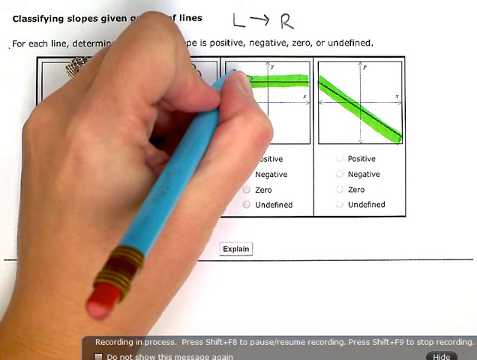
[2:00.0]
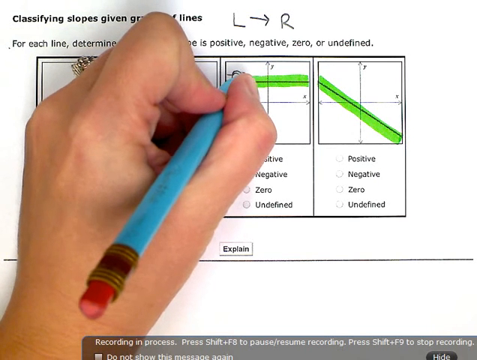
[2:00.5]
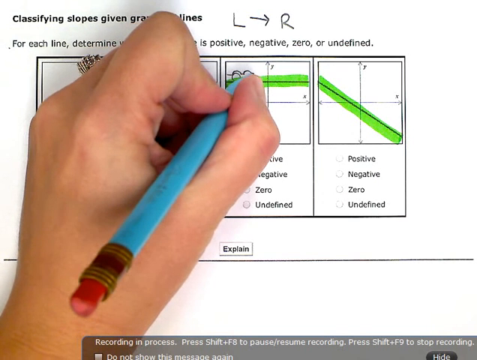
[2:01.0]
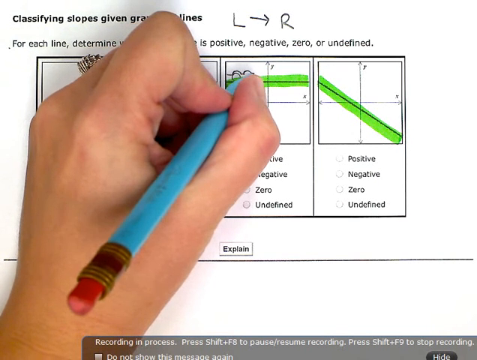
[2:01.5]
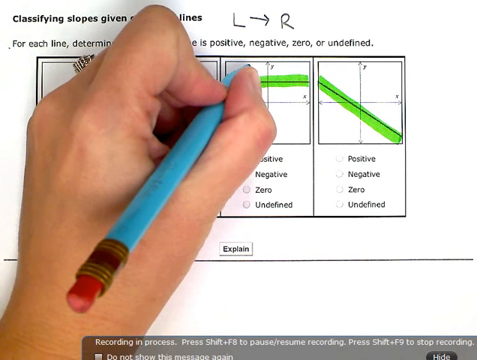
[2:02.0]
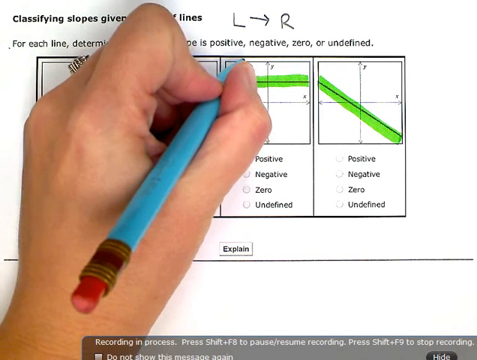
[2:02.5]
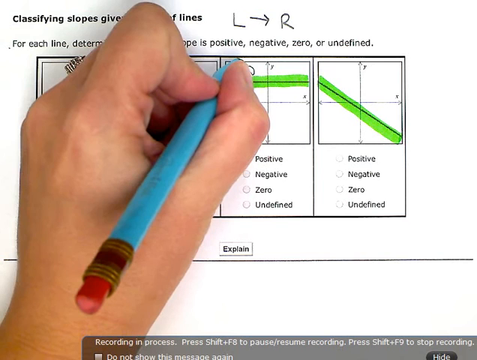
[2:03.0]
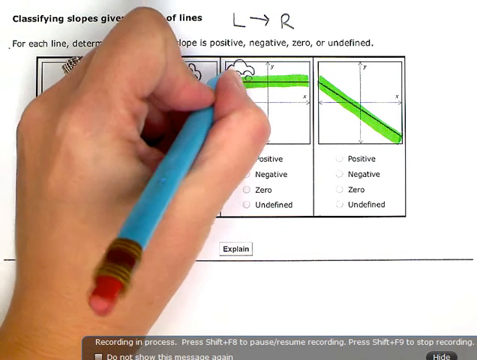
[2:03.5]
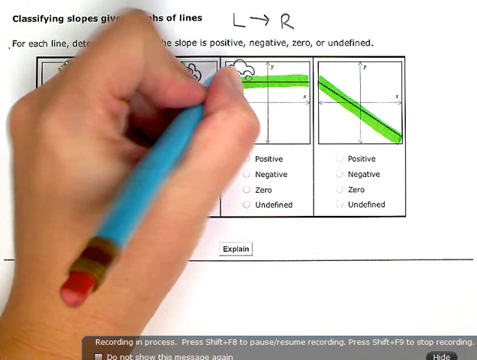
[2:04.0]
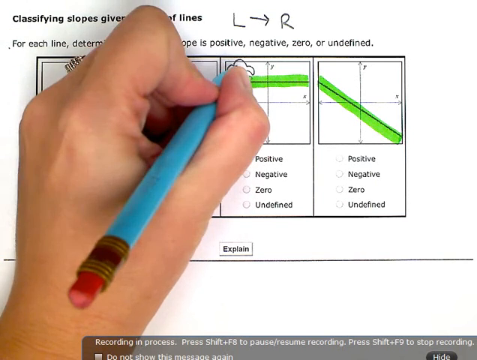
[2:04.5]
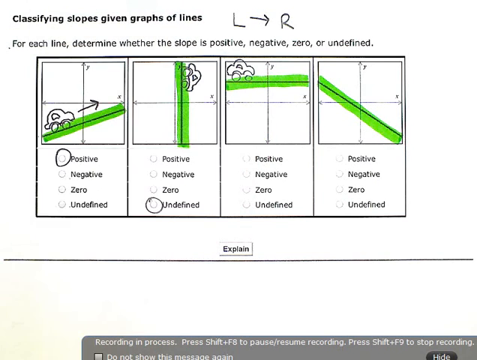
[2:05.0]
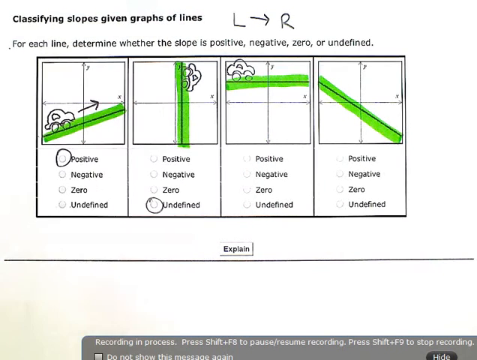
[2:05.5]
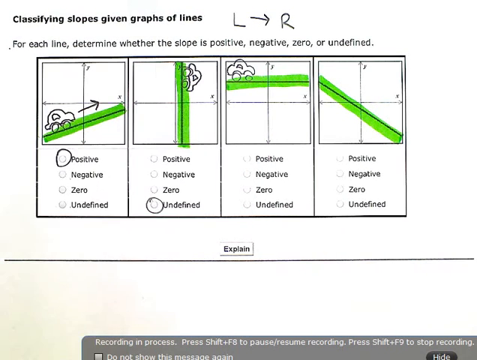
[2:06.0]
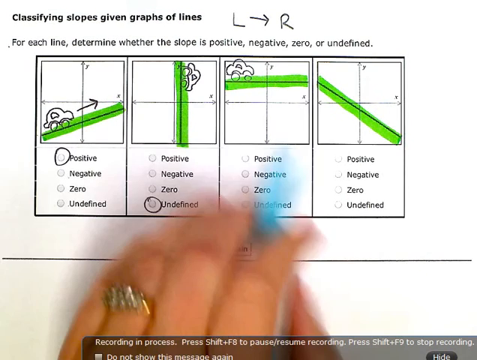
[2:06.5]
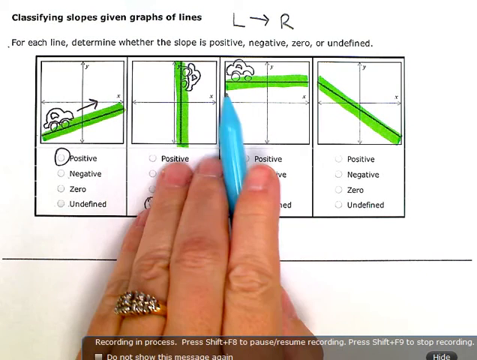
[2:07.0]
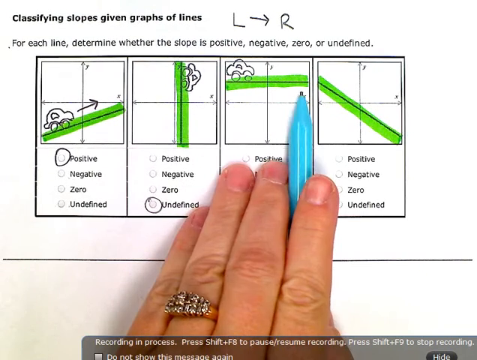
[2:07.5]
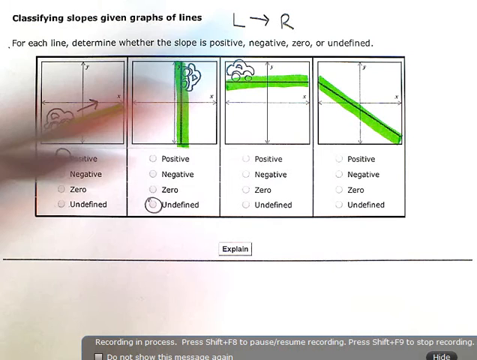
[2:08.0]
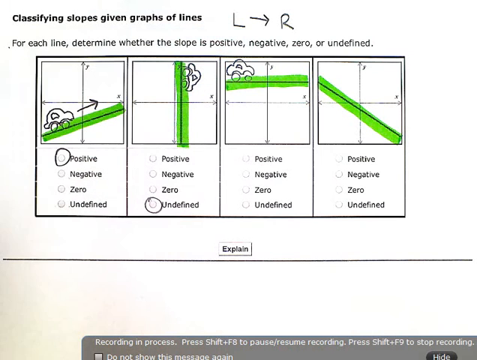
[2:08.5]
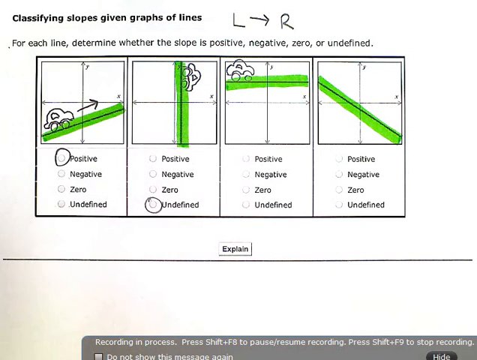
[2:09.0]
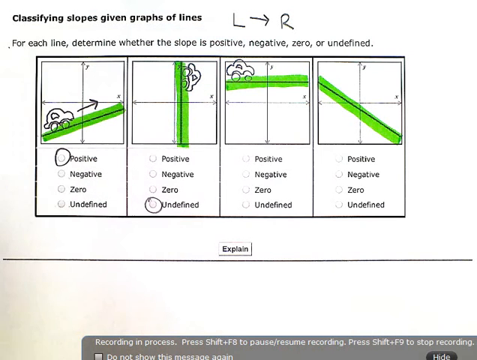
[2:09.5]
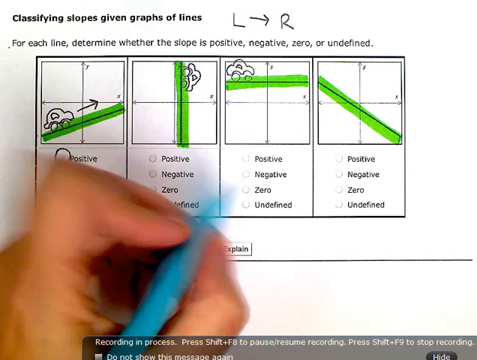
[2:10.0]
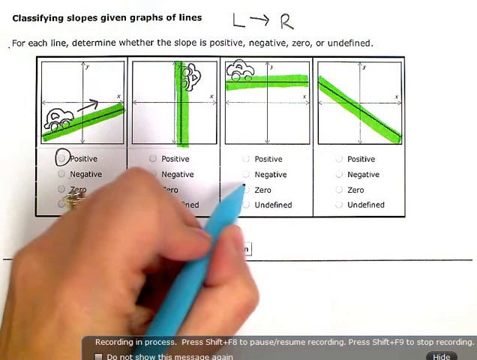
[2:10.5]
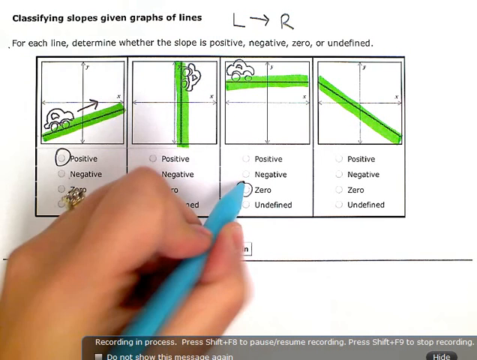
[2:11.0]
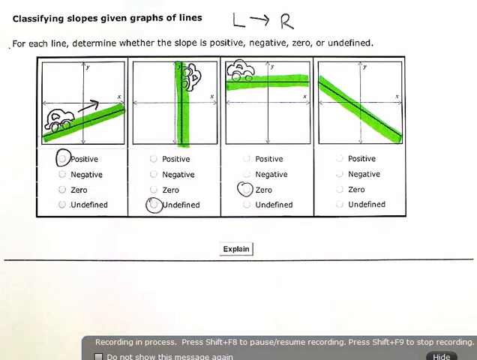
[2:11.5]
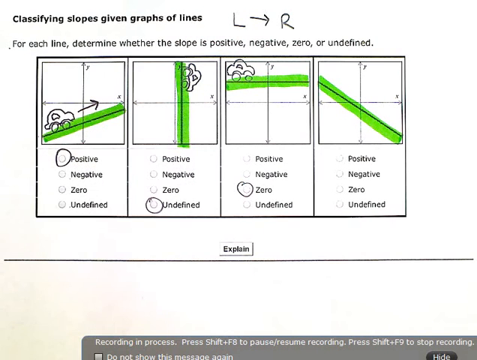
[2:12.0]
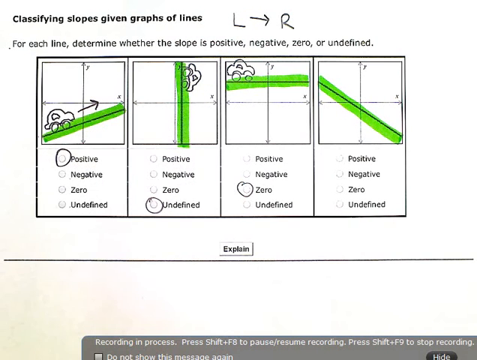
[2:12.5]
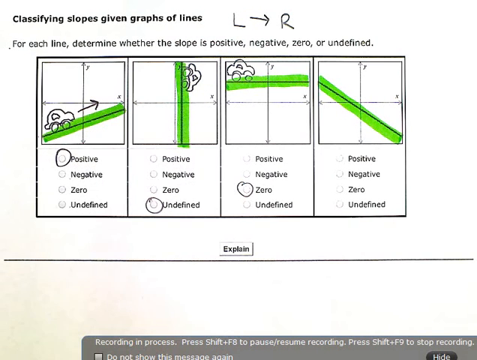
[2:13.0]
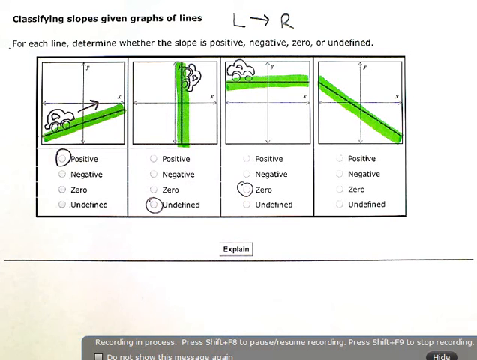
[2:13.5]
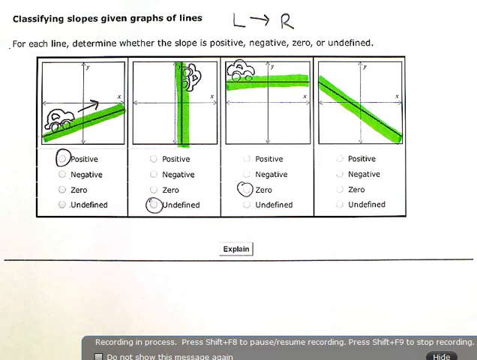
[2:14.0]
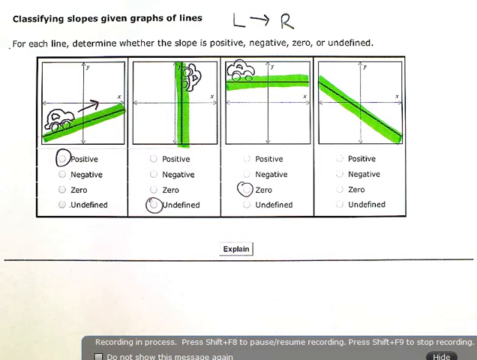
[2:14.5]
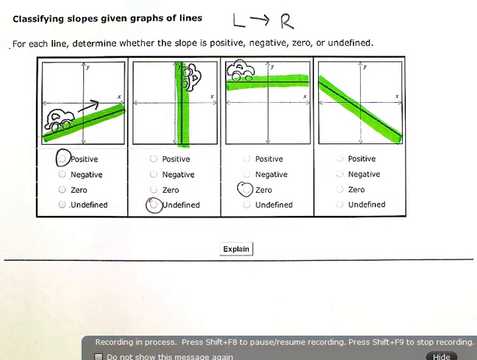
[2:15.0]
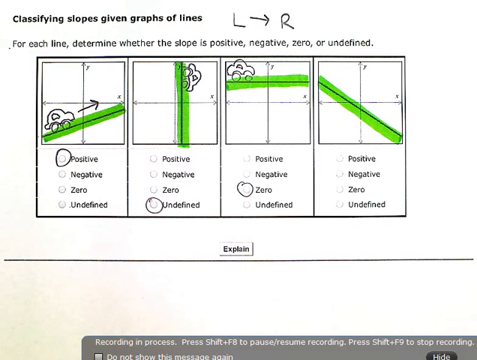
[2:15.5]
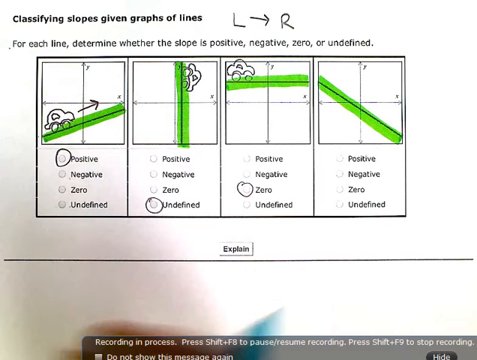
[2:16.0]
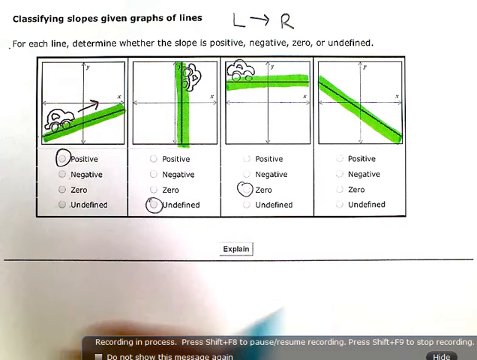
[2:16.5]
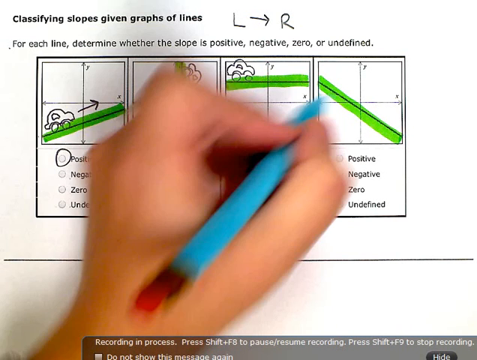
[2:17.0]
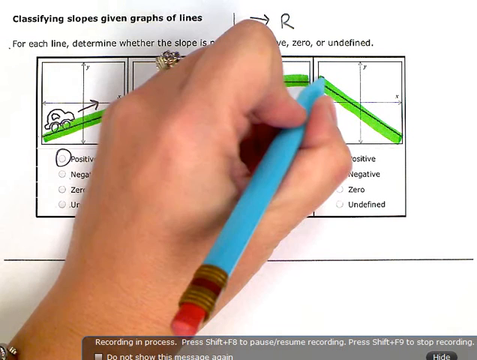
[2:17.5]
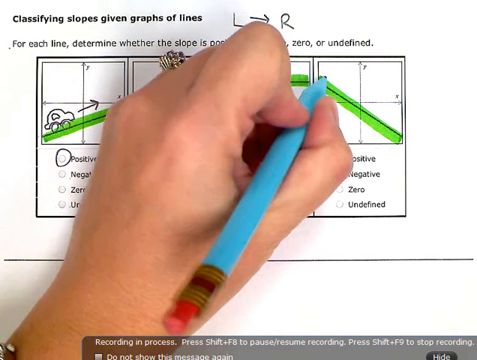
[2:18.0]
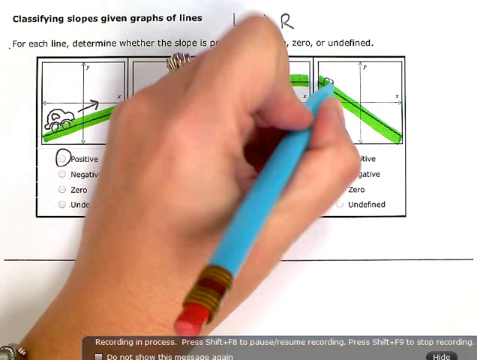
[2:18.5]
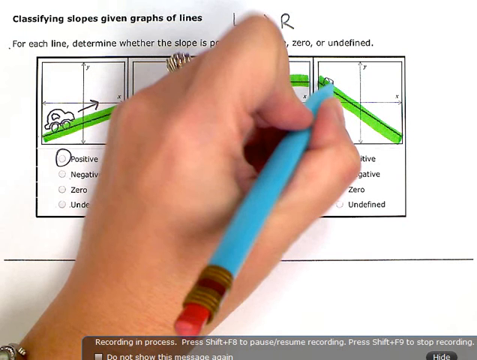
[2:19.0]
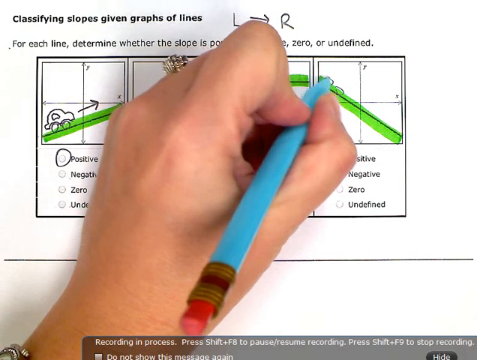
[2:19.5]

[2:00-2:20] A large image shows the child's hand on the left-hand side; the child appears to be left-handed. She wears a diamante-style ring on the second finger from the left, the ring finger, and holds a bright blue pencil with a rubber on the top. She appears to be working out the third problem, where the line is horizontal, and has drawn a little car on the top of the line, as she has in all the other problems she has answered. She circles zero as her answer for this problem. She then begins the fourth problem by drawing a little car on the slope. The child appears to be working through the problem sheet, solving all the answers using the information on the page.